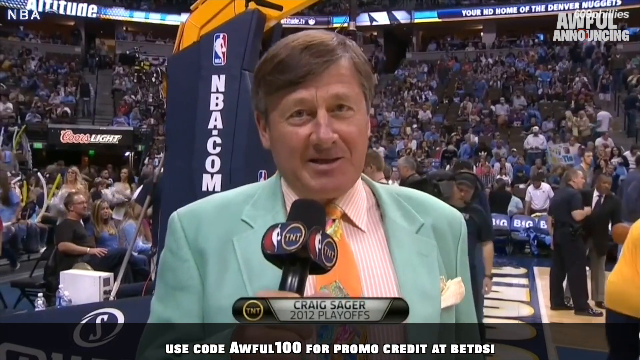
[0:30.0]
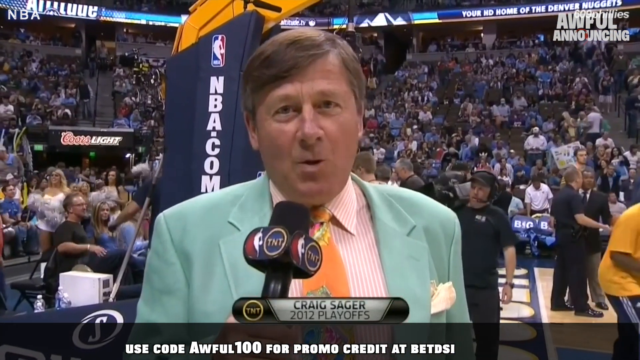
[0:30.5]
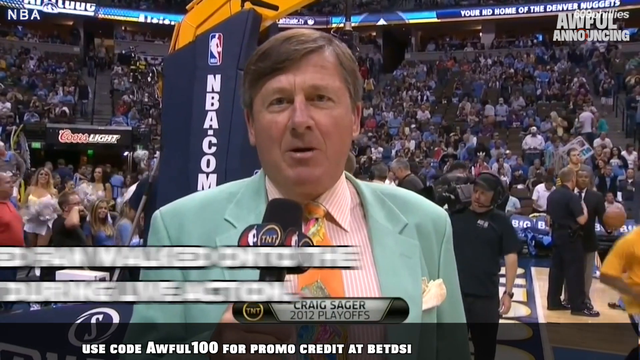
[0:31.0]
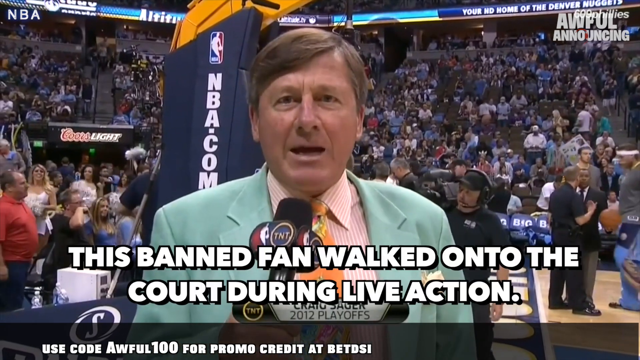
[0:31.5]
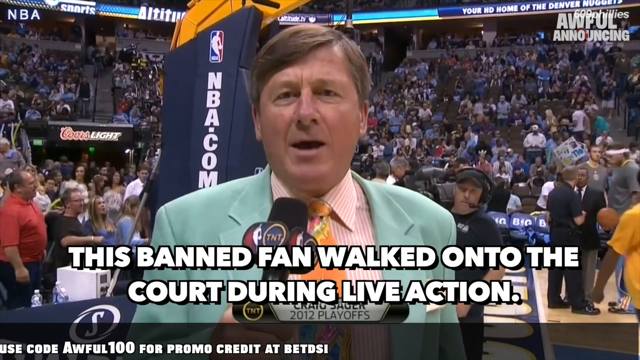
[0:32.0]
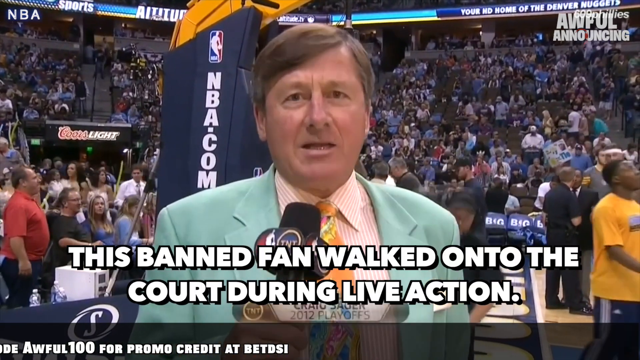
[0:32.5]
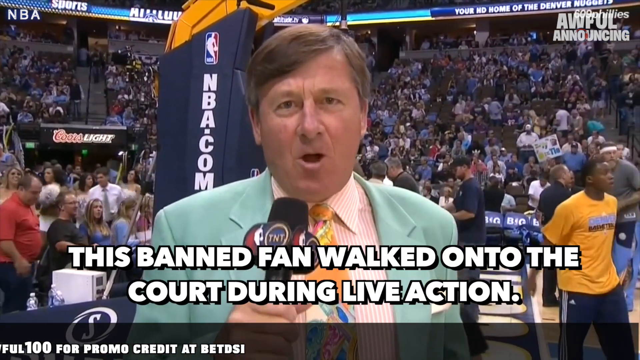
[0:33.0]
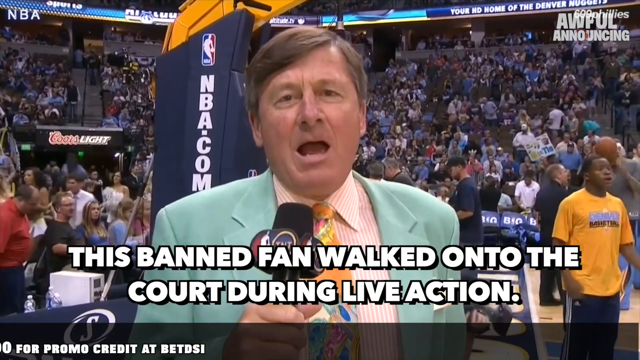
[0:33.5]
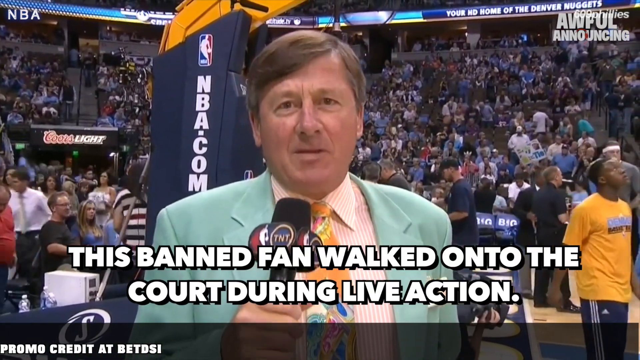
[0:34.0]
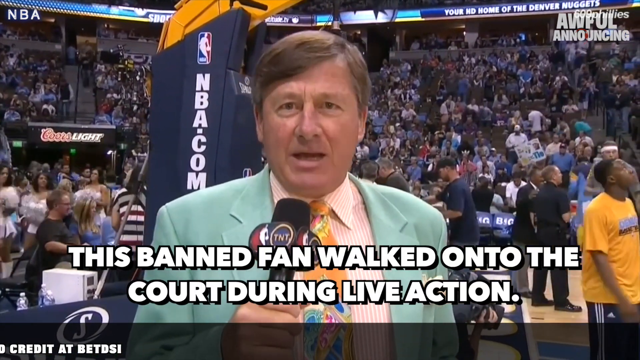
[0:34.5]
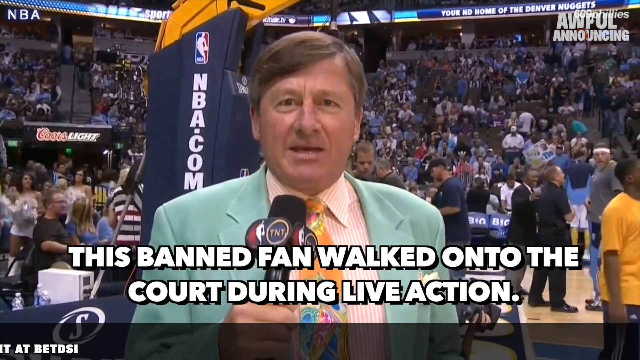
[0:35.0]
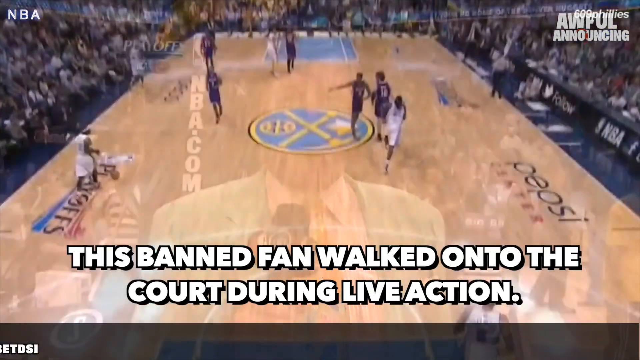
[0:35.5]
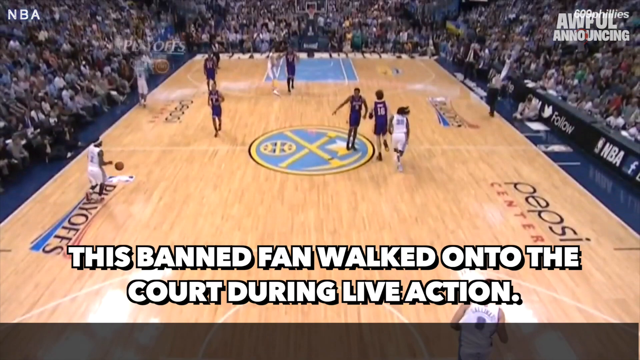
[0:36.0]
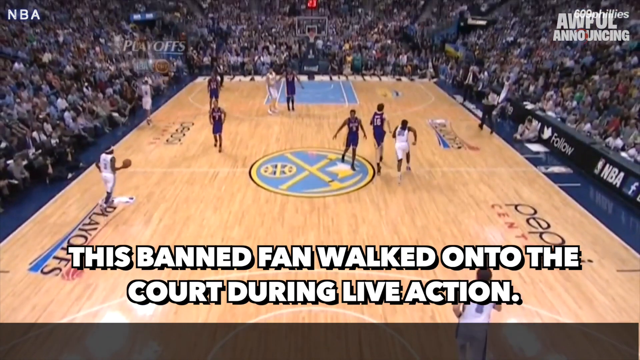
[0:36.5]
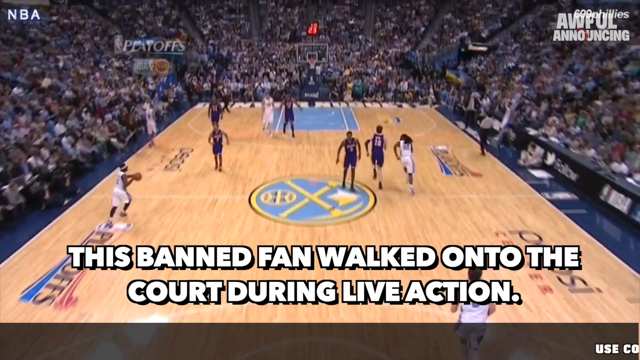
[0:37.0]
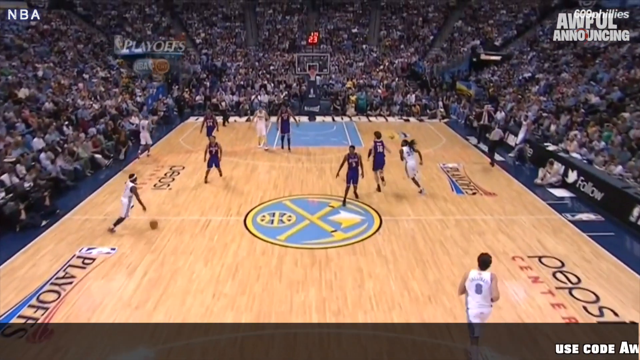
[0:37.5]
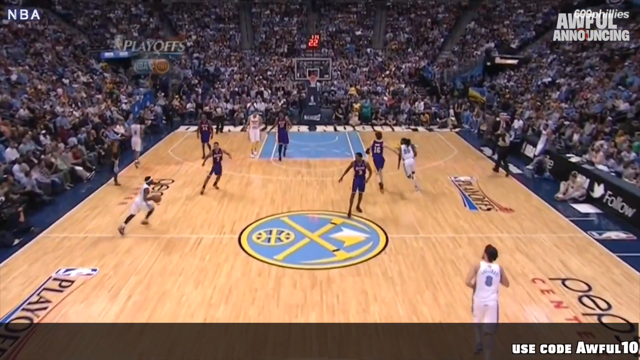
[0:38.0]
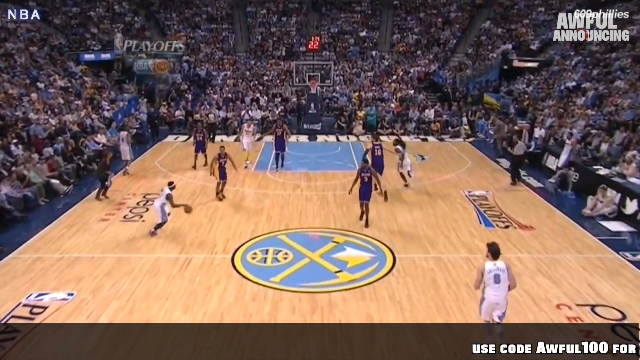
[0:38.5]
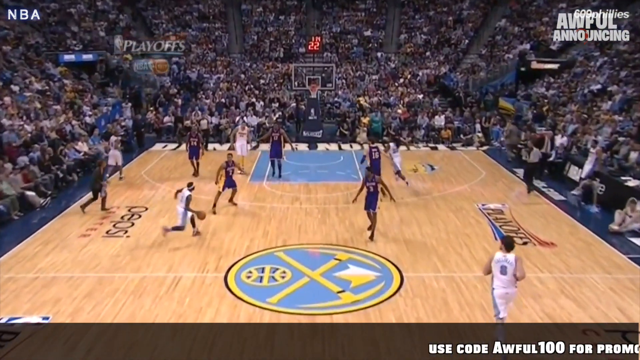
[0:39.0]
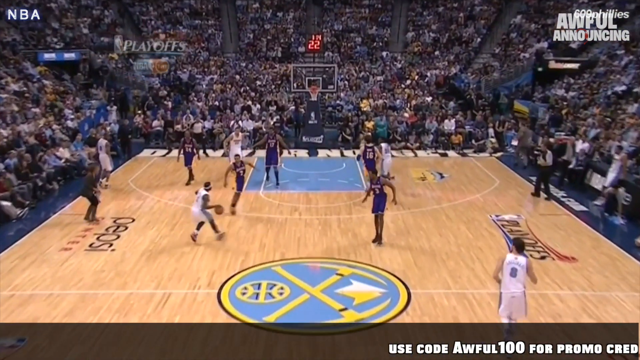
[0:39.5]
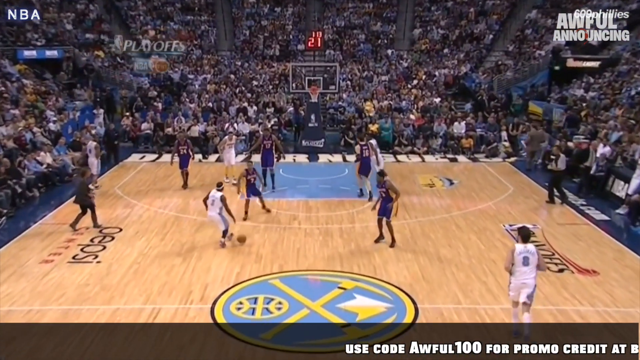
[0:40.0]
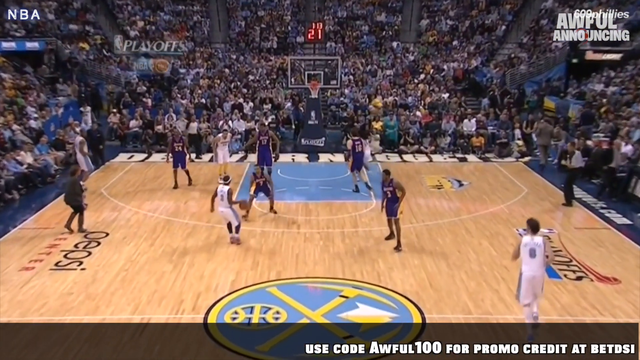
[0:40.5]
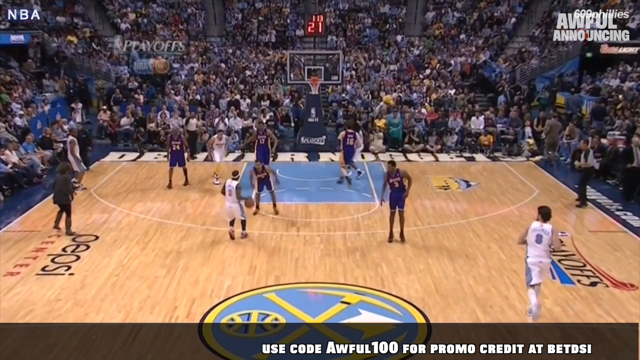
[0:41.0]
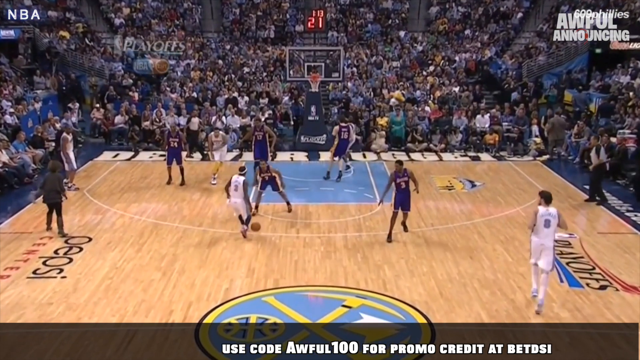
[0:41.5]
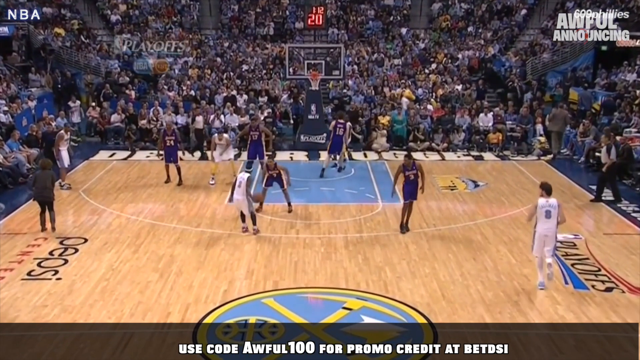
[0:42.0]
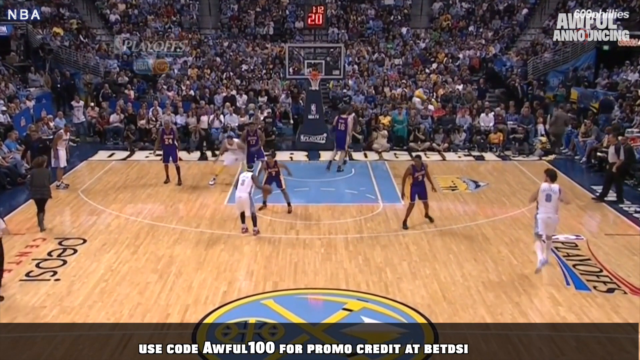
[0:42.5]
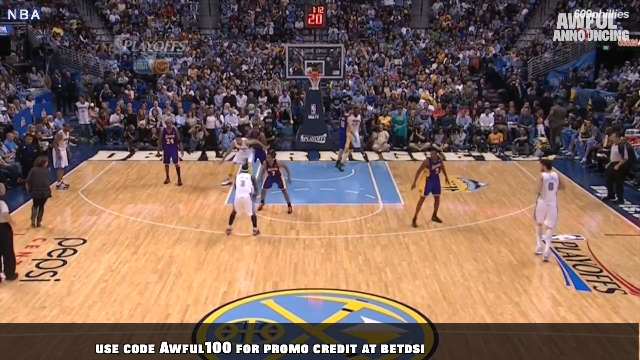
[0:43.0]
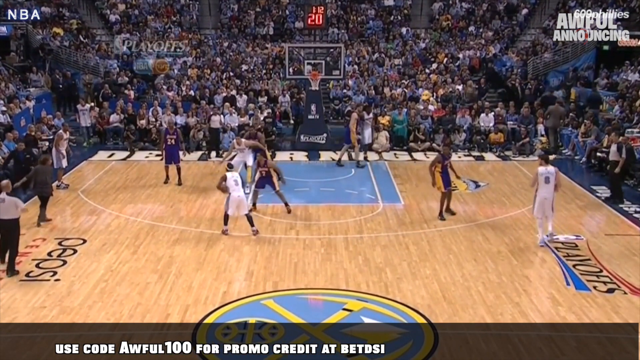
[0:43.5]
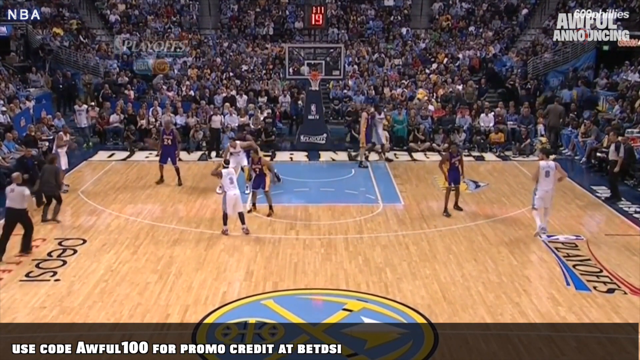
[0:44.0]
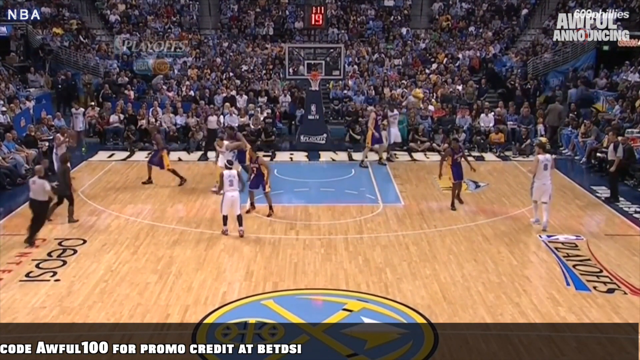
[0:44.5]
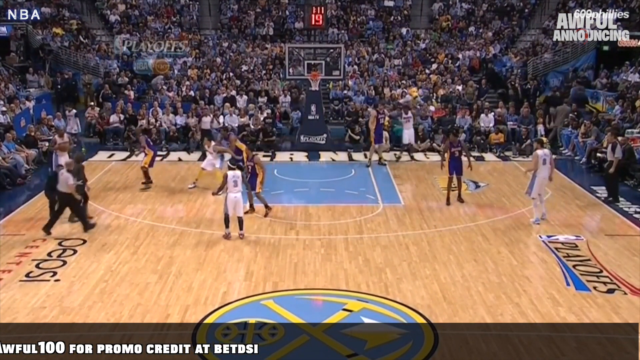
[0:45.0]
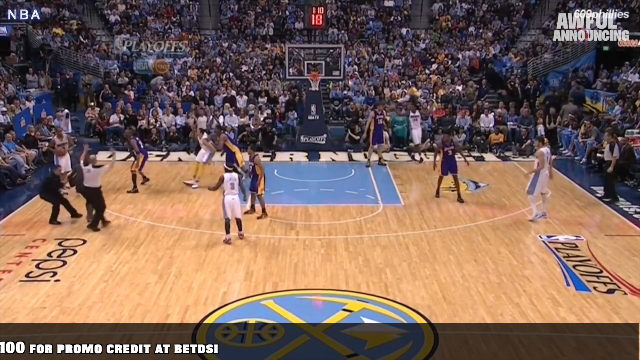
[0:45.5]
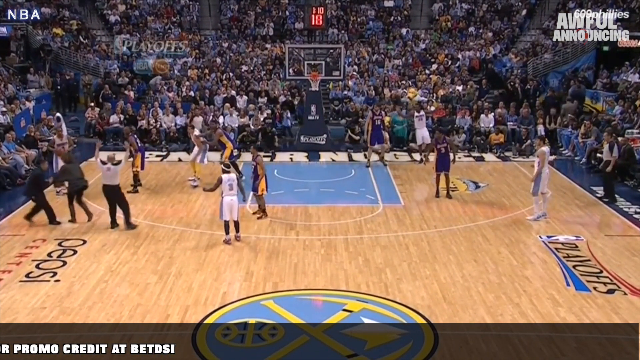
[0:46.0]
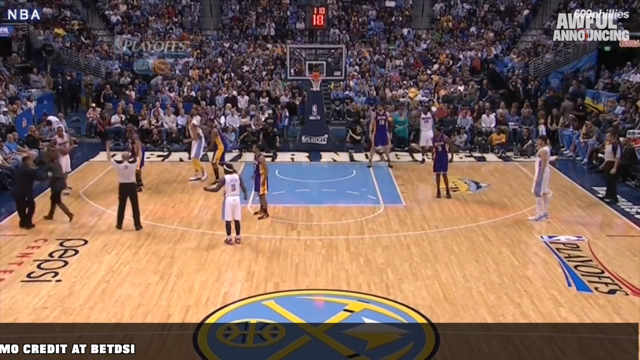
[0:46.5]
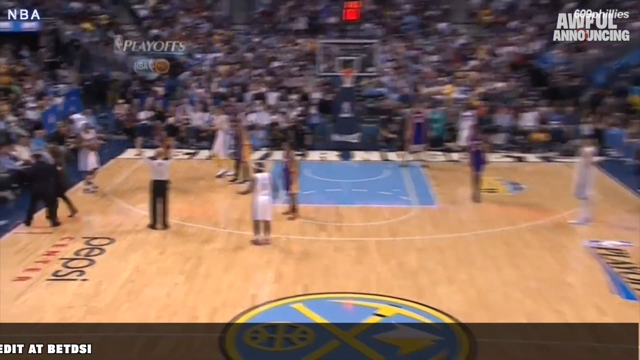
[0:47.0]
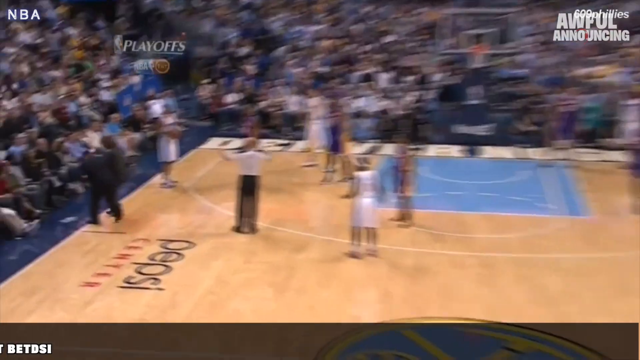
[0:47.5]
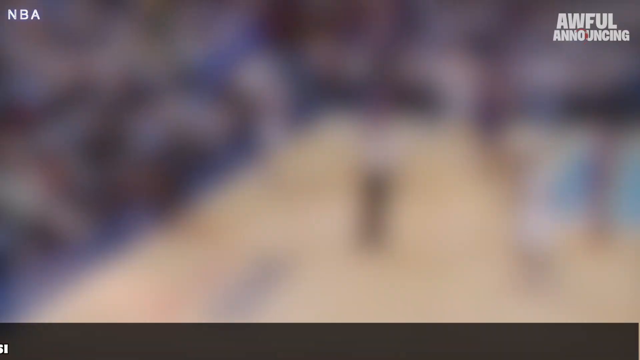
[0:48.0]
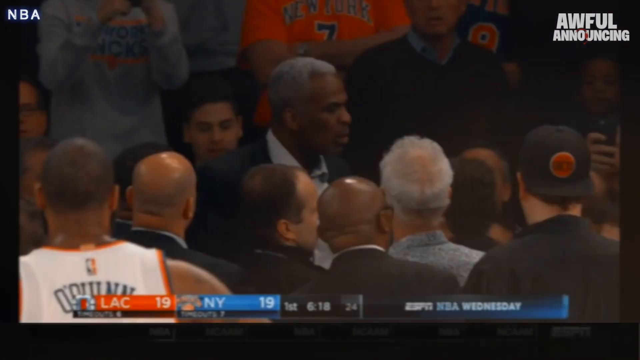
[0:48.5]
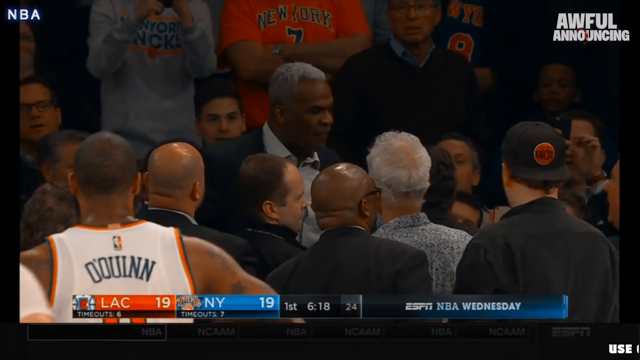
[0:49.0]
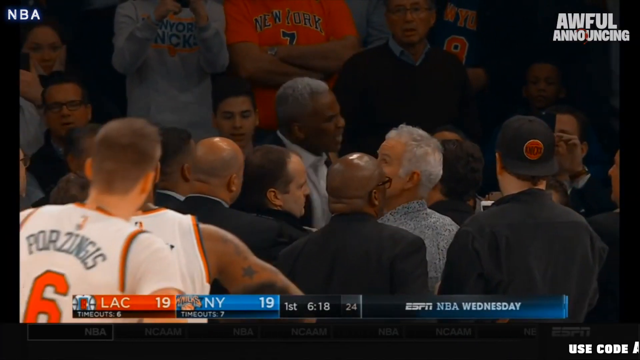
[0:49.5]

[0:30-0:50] A man who looks to be white is in the center of the screen, wearing a green jacket, a pink and white striped dress shirt, and a colorful tie in orange, yellow, pink and white. Beneath him at the bottom center of the screen the text reads "Craig Sager 2012 Playoffs," and underneath that, "use code awful100 for promo credit at BetDCI." Captions at the bottom center then read "This banned fan walked onto the court during live action." As the man continues speaking, a slow-motion clip of a basketball game plays, in which a fan interrupts the game and walks onto the court. The entire video is rectangular, and the setting is indoors with a good amount of artificial light.